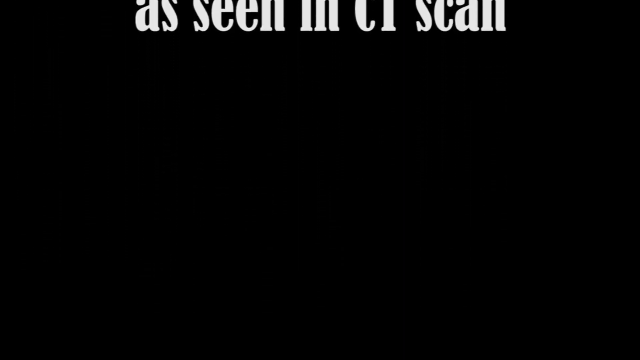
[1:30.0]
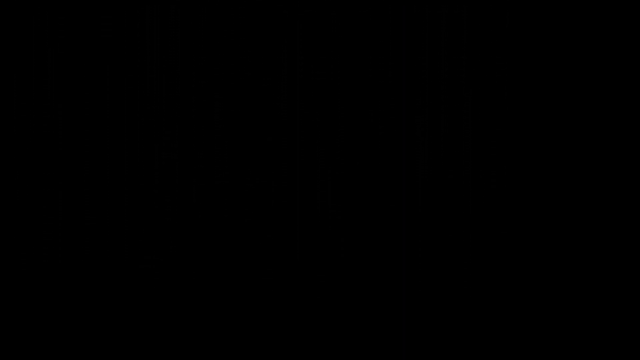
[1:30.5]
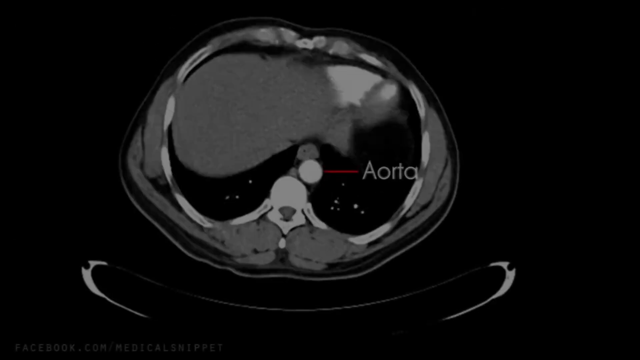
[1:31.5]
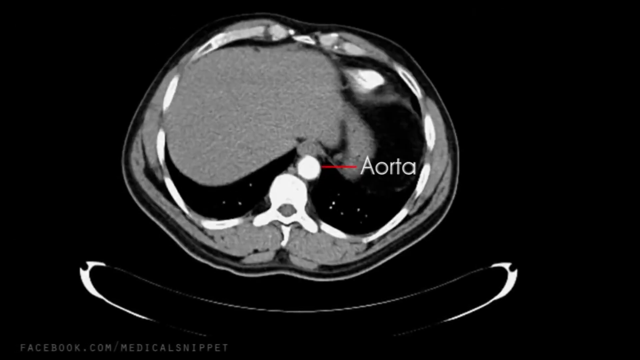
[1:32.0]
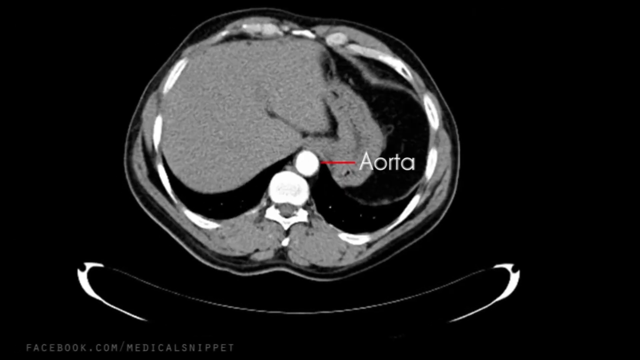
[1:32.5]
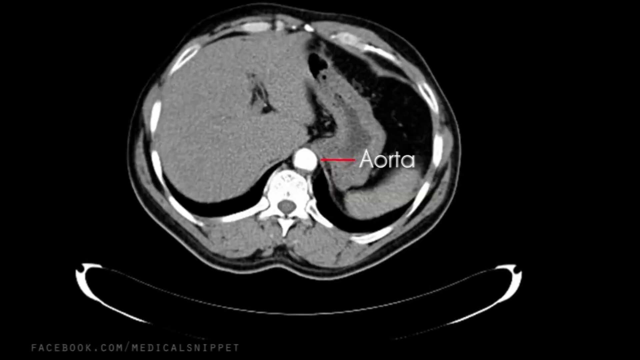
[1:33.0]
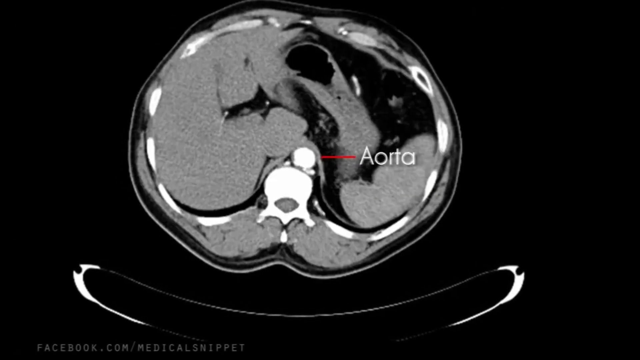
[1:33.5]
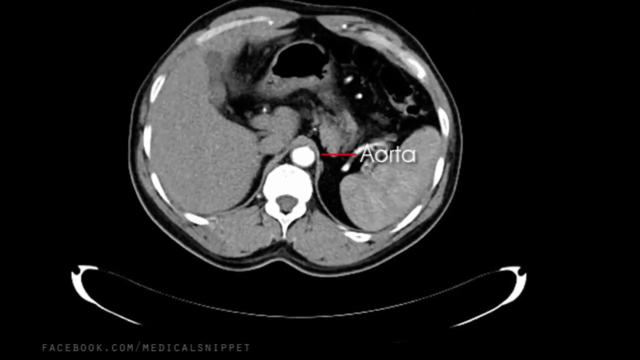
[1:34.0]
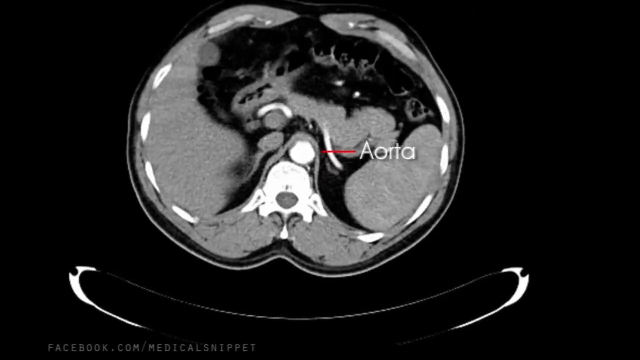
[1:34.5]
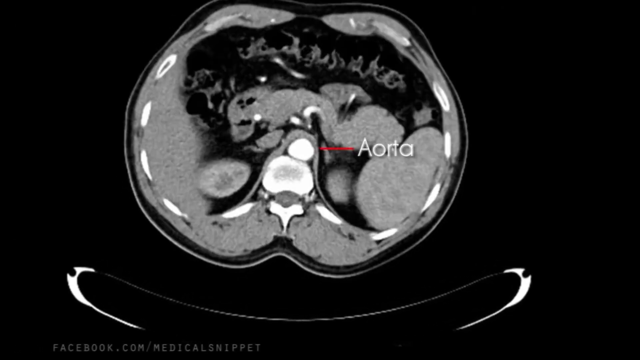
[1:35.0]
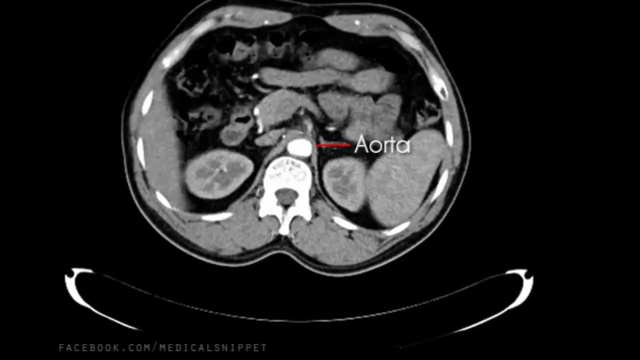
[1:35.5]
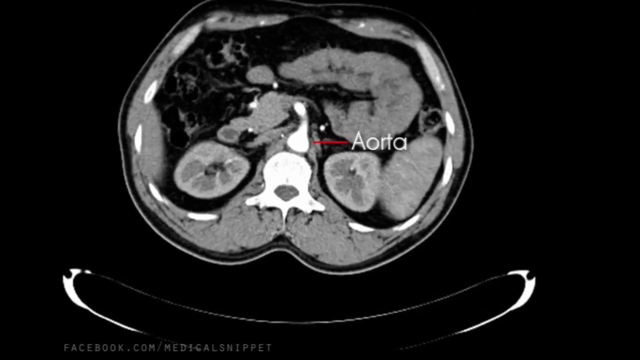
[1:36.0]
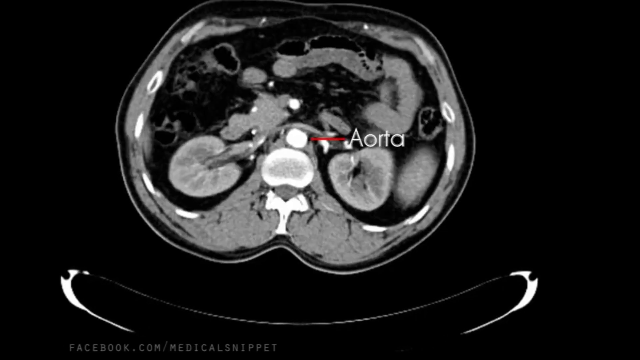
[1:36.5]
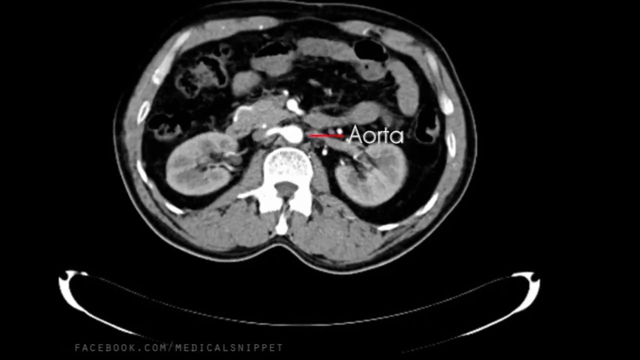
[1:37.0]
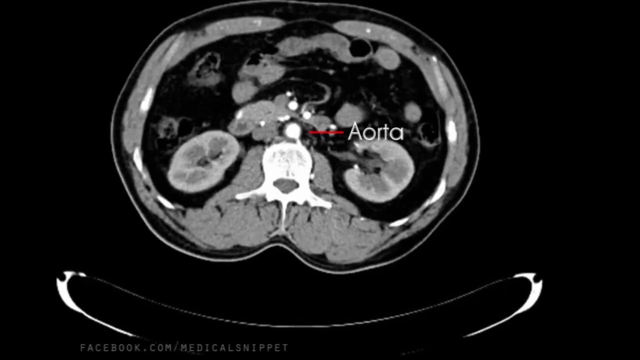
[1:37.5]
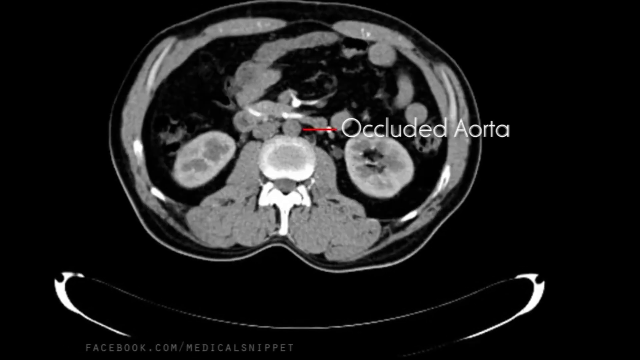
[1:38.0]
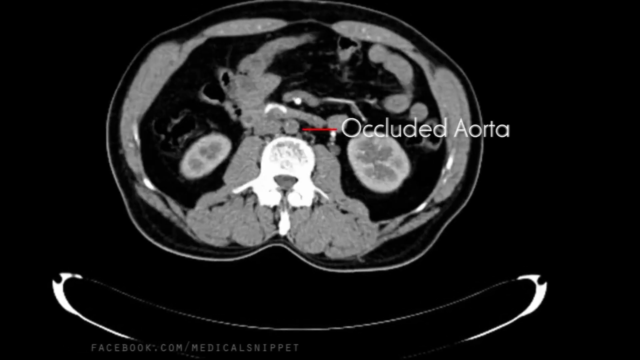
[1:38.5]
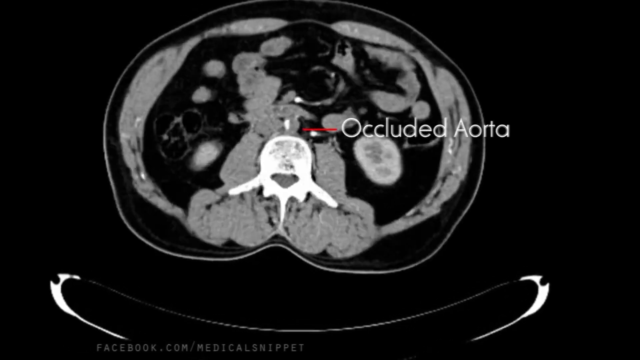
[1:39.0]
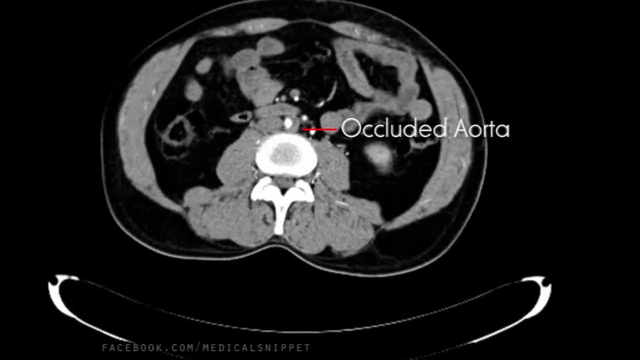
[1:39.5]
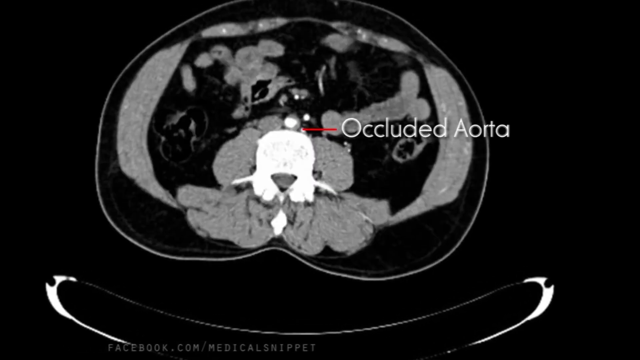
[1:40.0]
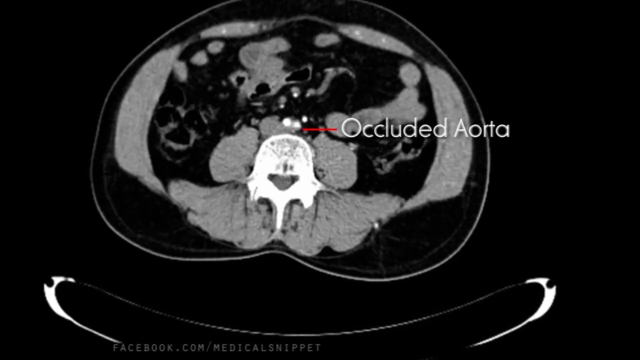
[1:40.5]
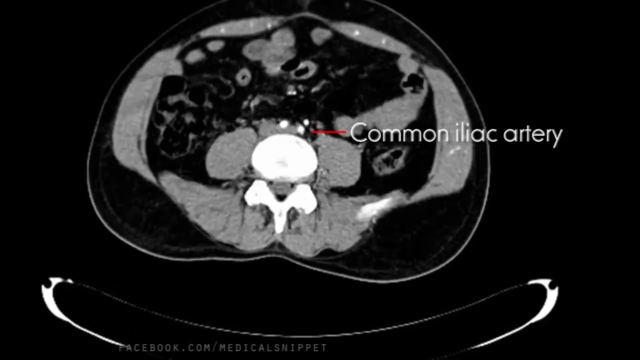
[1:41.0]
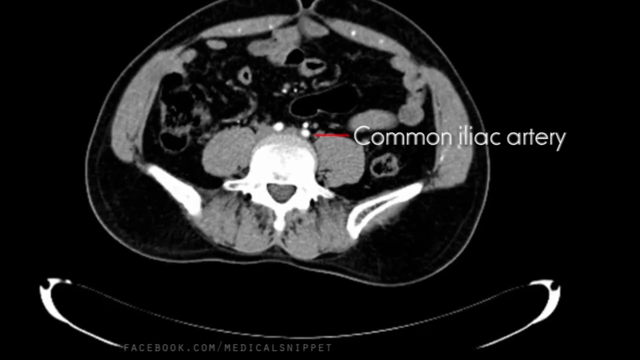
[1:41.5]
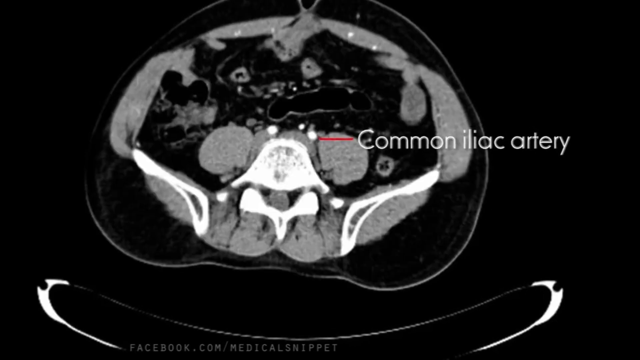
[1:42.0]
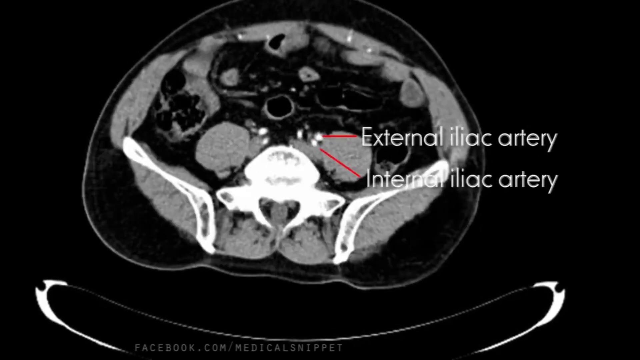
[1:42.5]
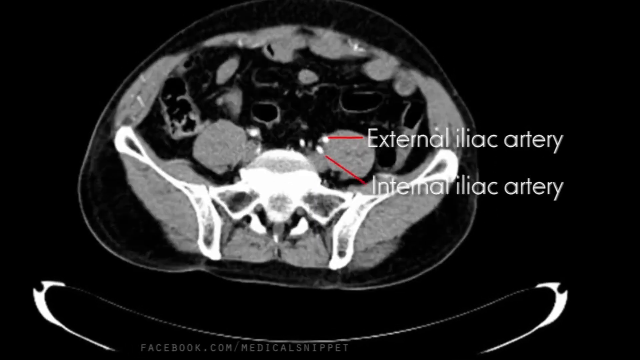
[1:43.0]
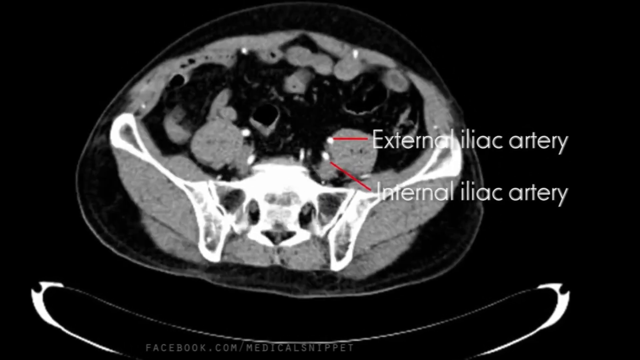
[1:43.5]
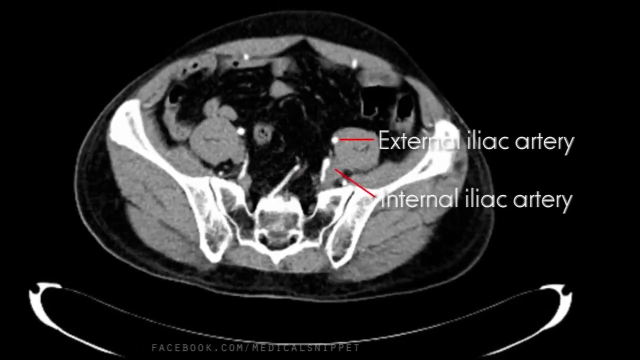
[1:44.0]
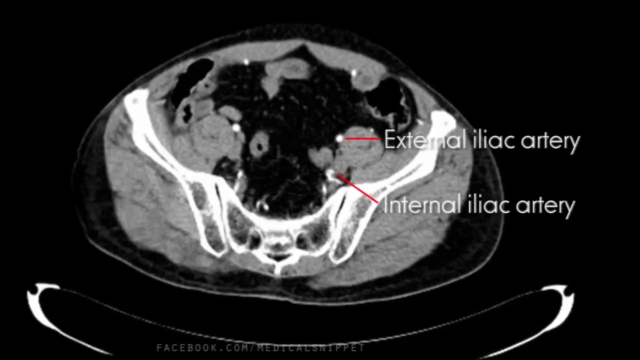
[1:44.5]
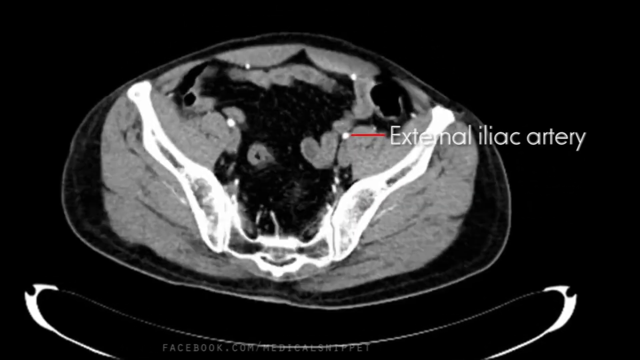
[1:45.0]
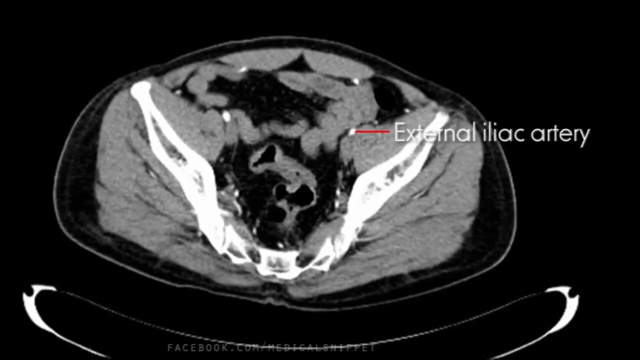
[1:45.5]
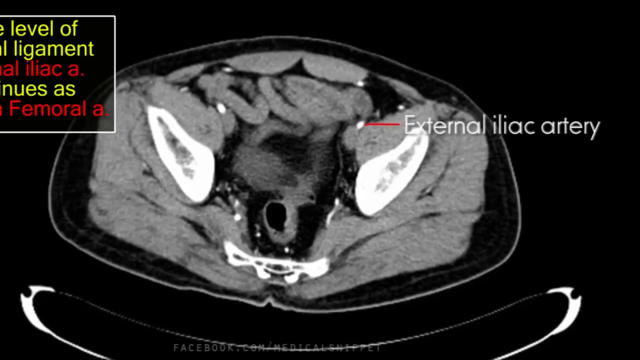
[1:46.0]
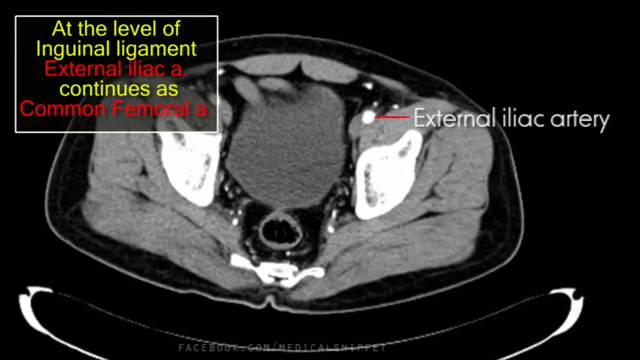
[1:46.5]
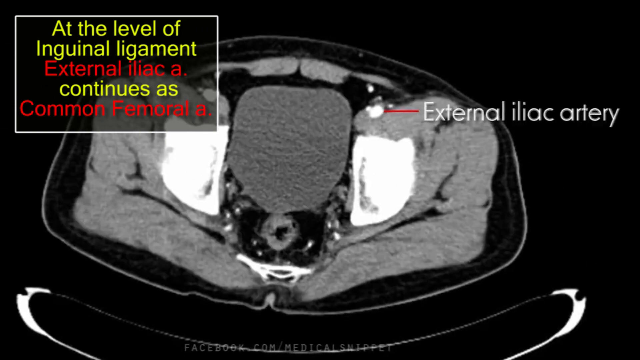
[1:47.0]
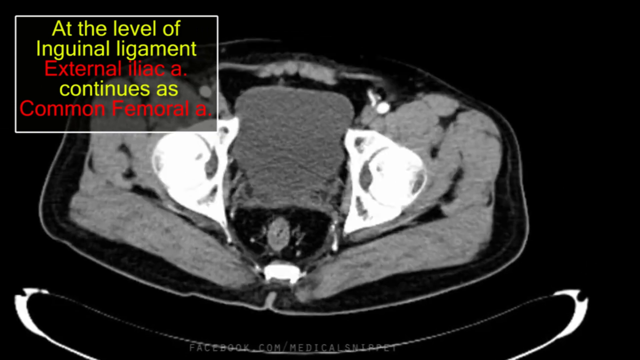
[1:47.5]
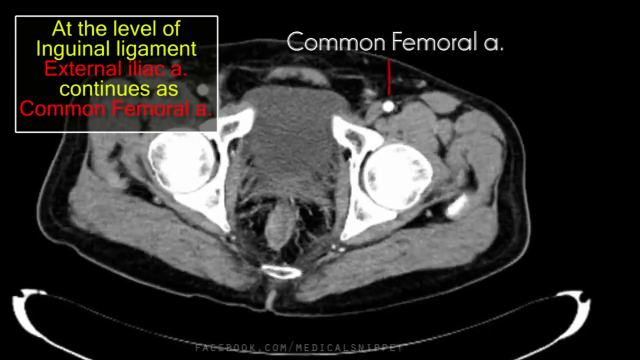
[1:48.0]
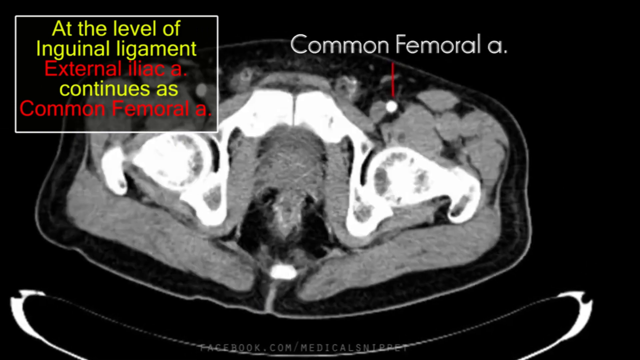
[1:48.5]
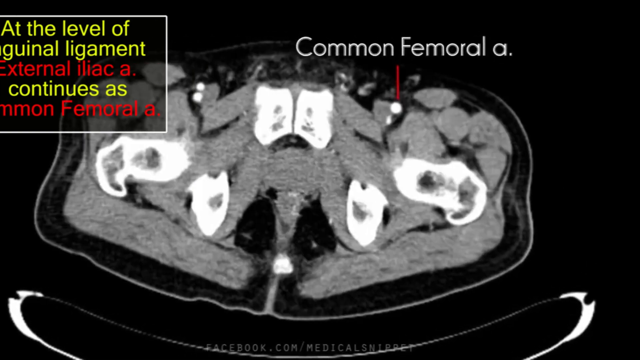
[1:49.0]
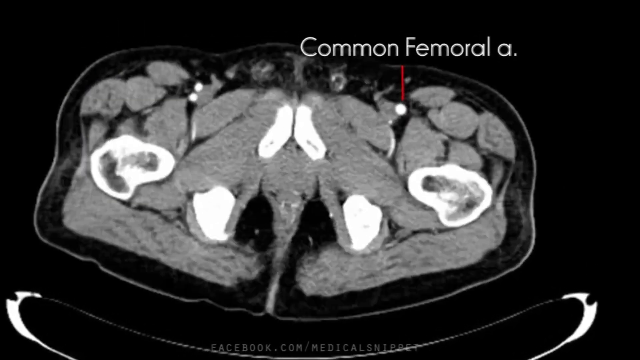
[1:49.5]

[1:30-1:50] On a black screen, the words "as seen in CT scan" are at the very top and quickly move off the screen. After a couple of seconds, the video cuts to a black screen with what appears to be an MRI image in the middle: a black and white image of what appears to be a heart. A line points to the center, labeled "aorta". Next, "occluded aorta" appears, written in white letters. The image continues to move and transform. A third line says "common iliac artery", followed by "external iliac artery" and "internal iliac artery". After several more seconds, more descriptions appear in red and yellow font in the upper left-hand corner of the screen.